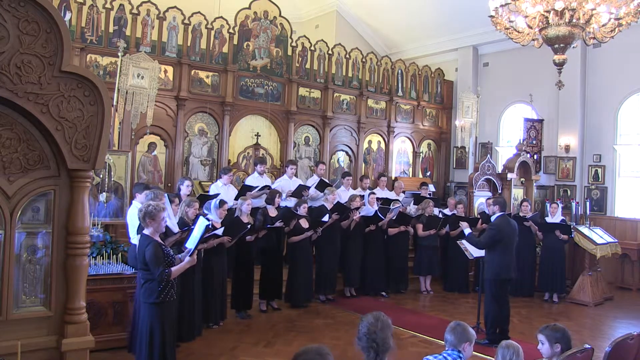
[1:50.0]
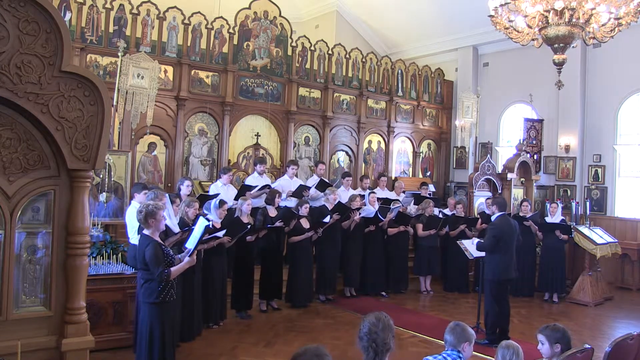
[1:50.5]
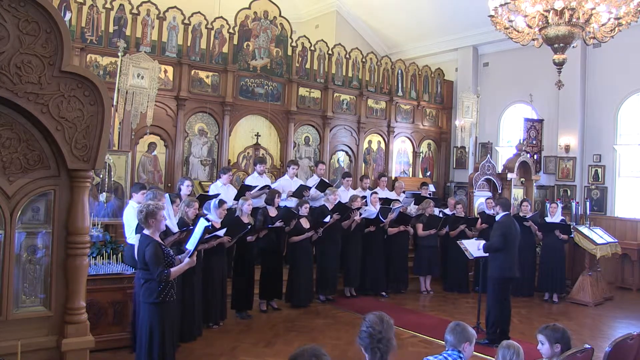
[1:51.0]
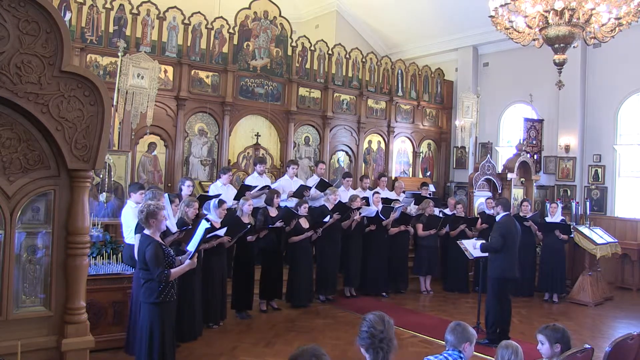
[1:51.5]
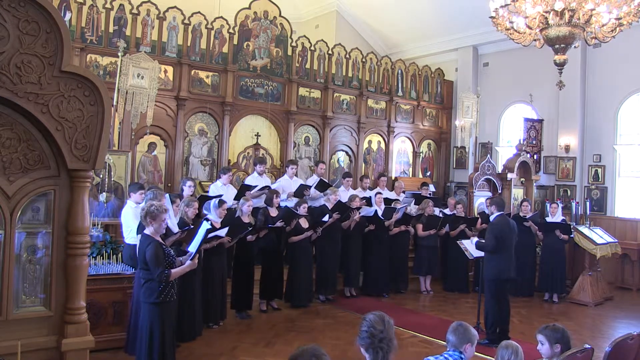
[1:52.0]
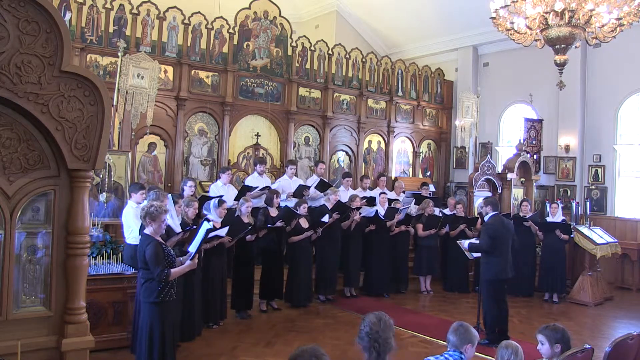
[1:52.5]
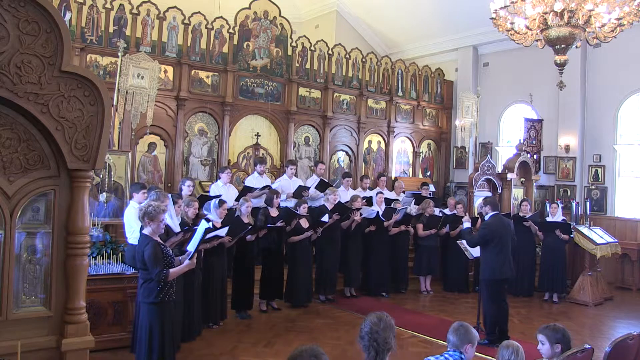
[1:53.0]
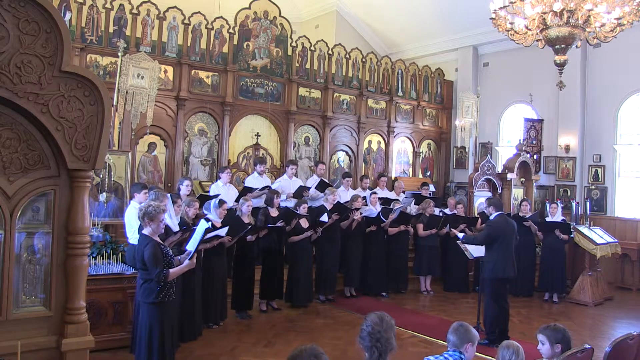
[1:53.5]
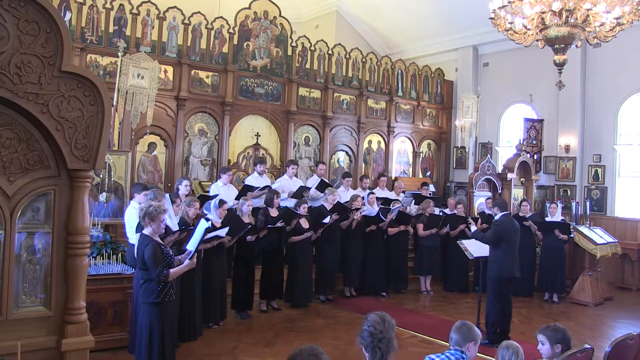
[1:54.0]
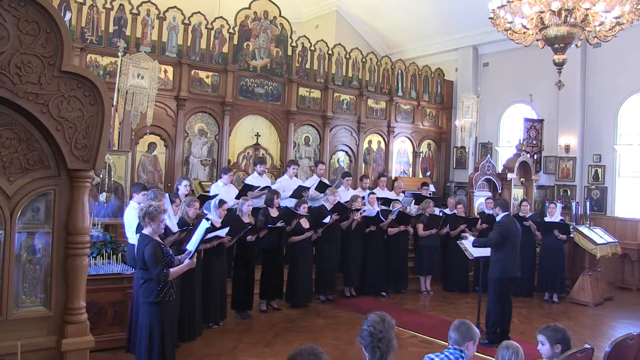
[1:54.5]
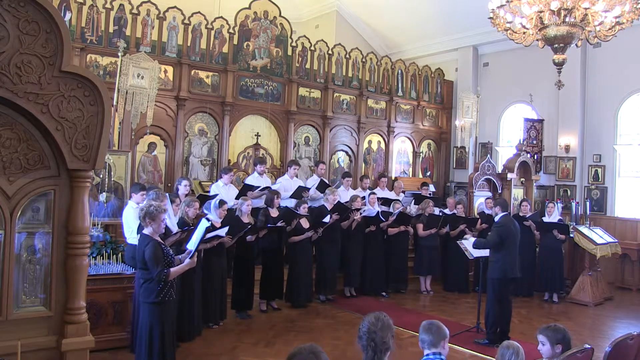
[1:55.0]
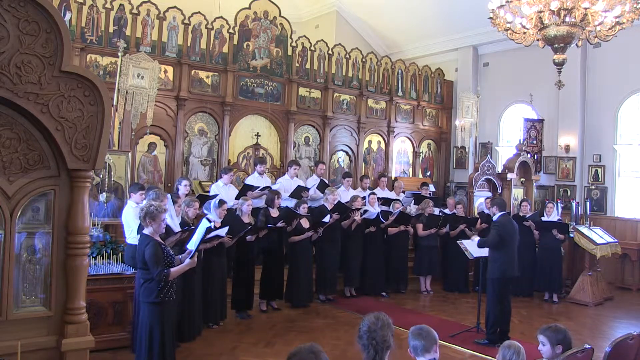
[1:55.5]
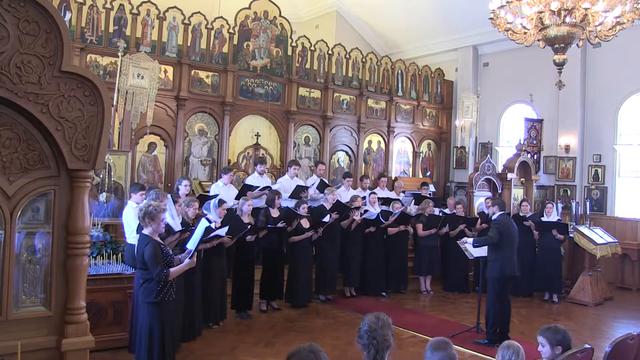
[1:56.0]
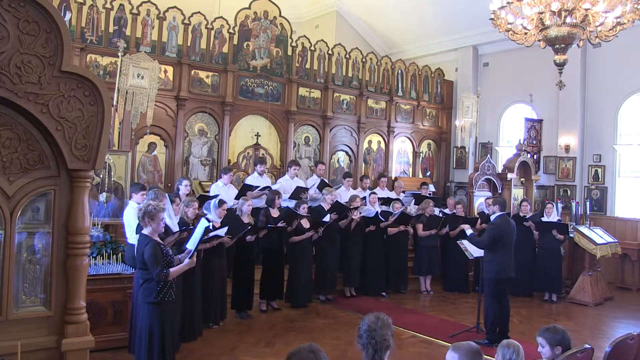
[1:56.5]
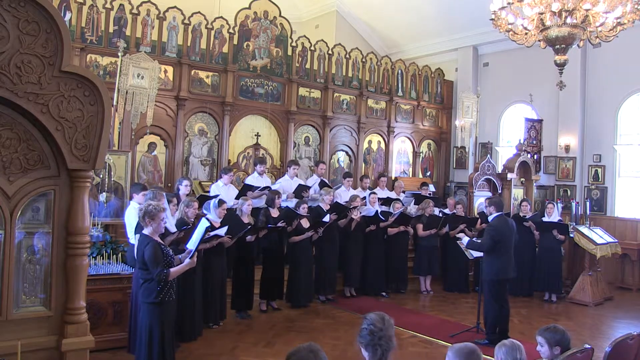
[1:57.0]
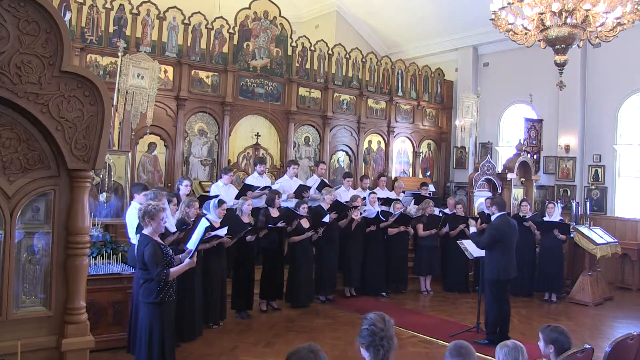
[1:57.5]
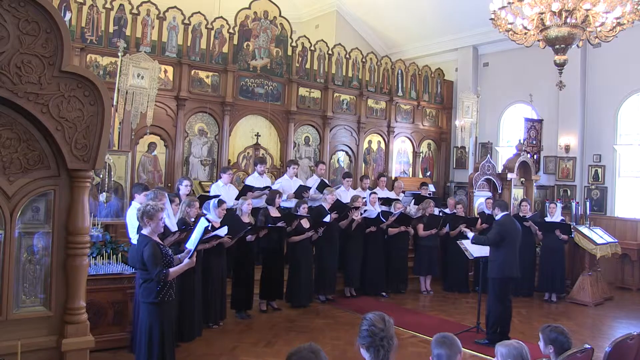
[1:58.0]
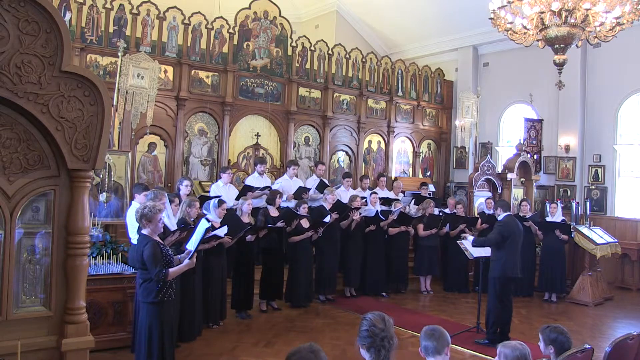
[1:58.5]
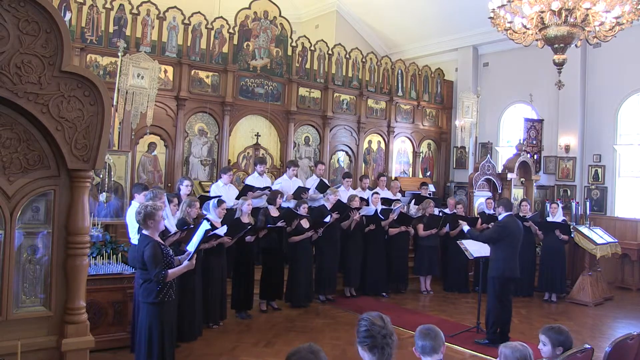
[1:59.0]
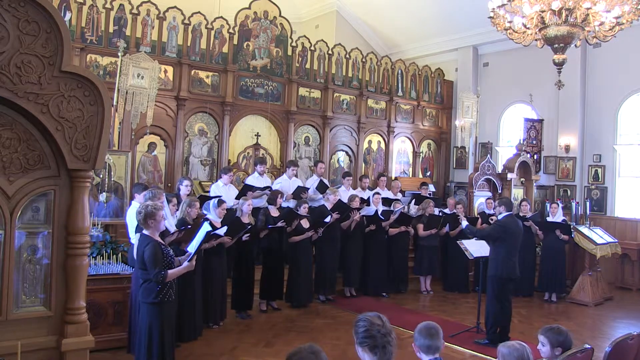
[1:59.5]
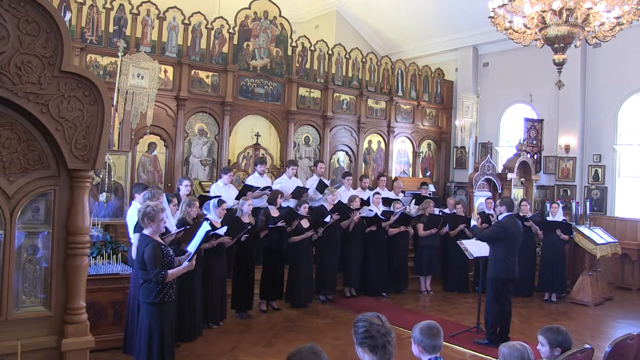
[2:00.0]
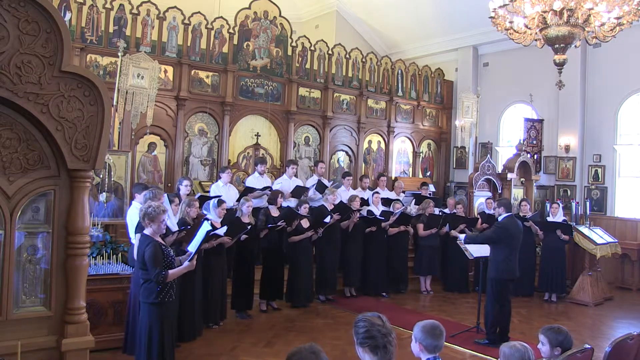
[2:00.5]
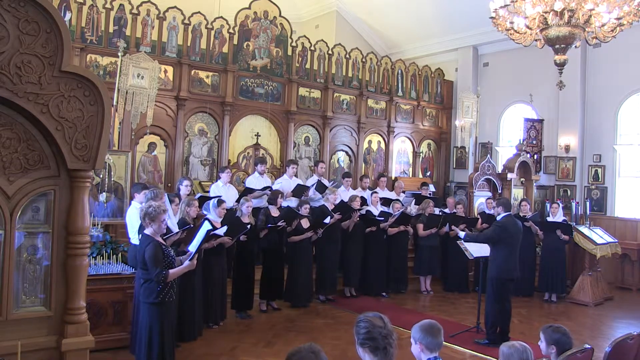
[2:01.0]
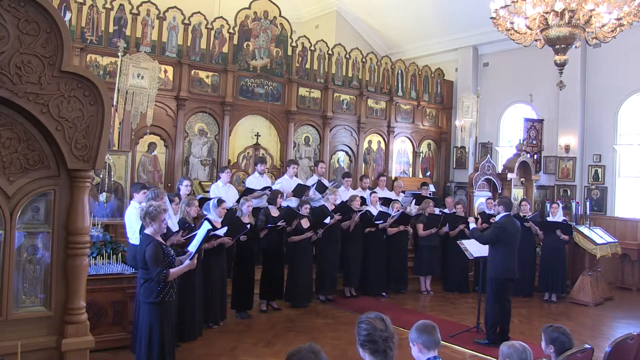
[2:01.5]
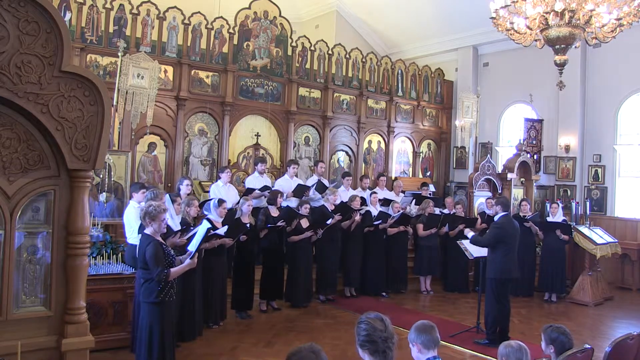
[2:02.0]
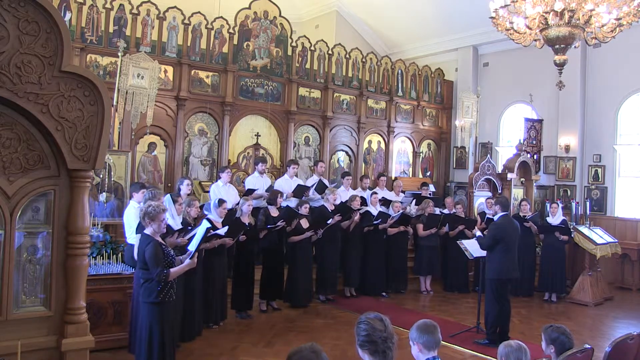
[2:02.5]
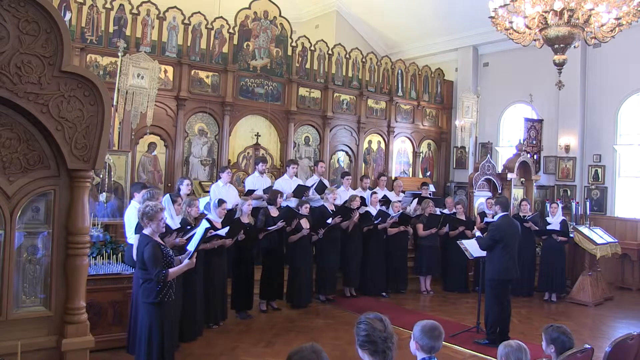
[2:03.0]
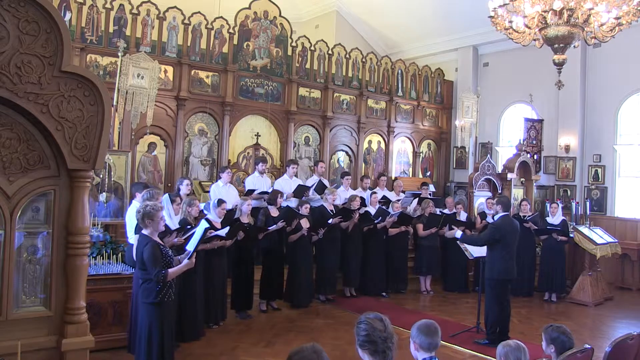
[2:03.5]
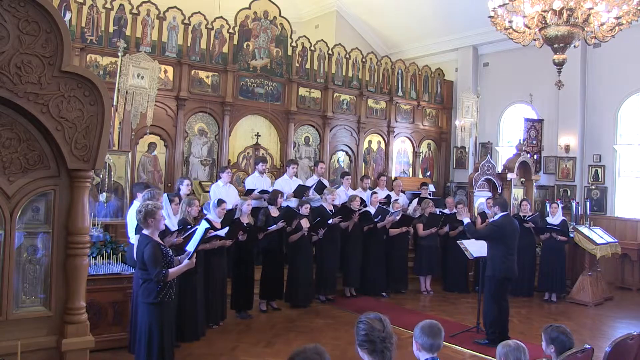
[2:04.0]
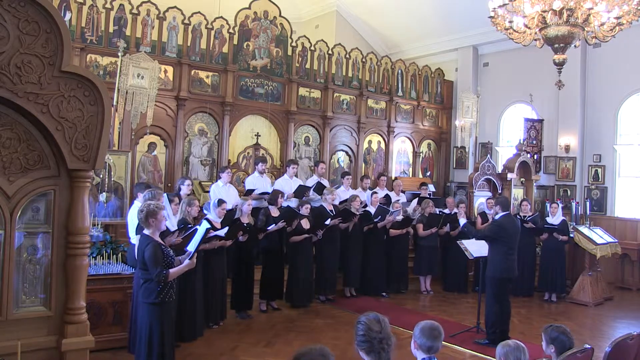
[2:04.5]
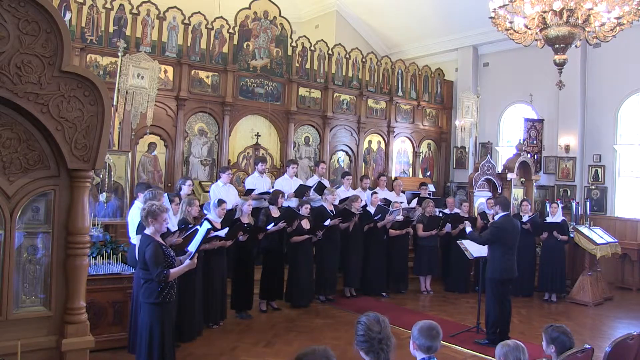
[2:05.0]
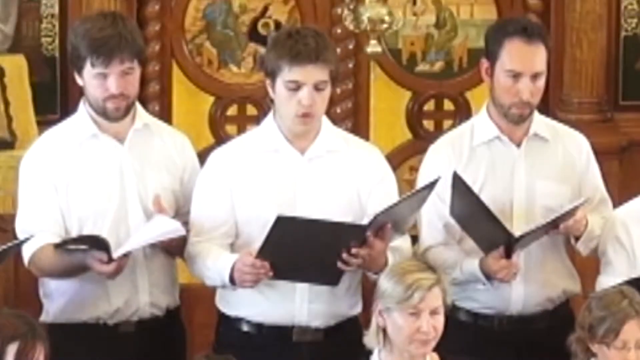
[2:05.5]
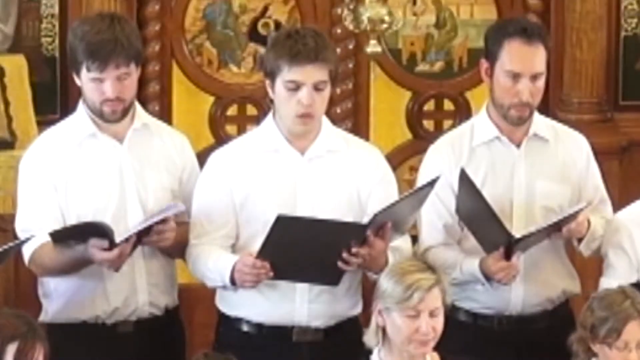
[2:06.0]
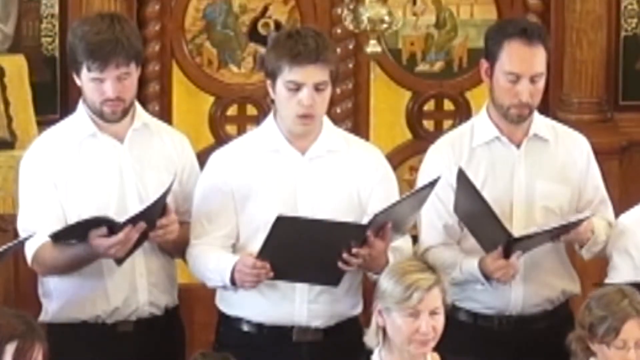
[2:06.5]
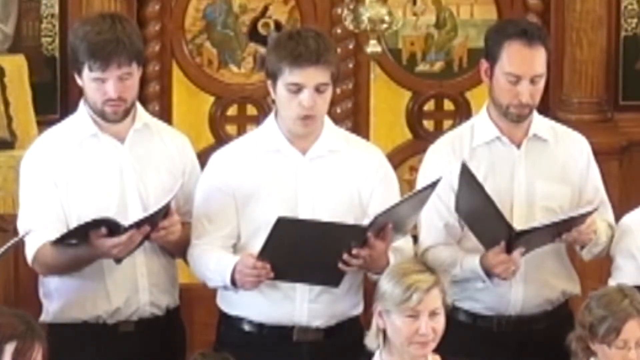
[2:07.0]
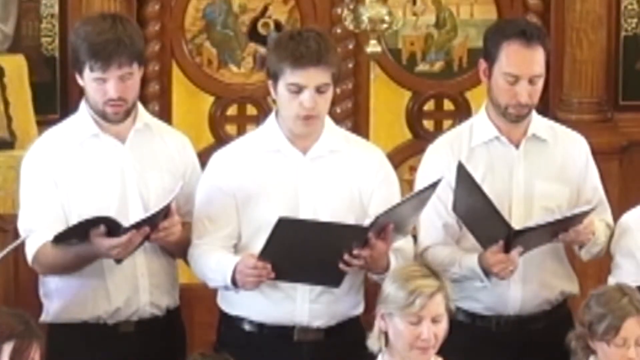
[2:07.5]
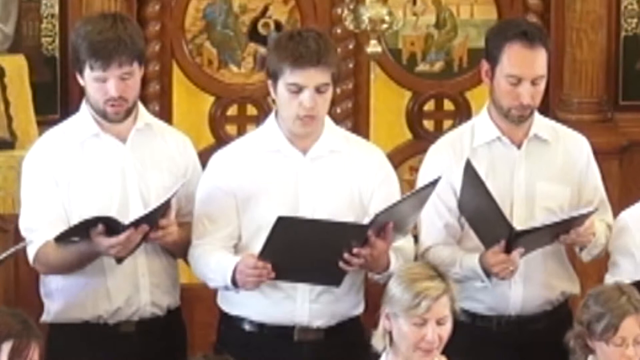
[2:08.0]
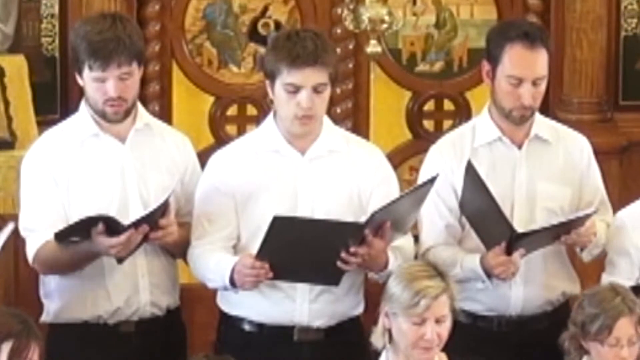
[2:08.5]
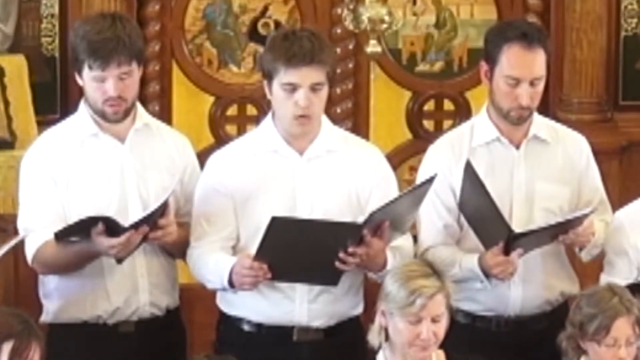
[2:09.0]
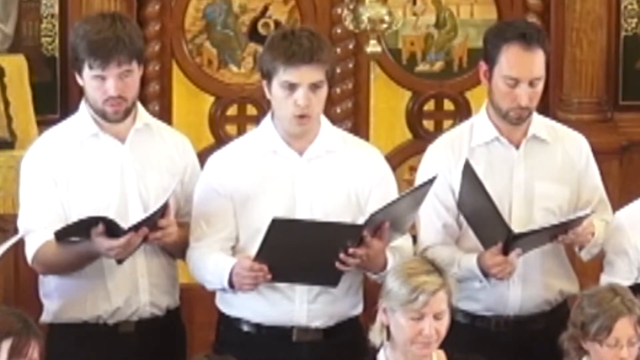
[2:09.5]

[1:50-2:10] The people continue to sing and seem to move with the flow of the music, while the conductor coordinates the choir with hand gestures. The view focuses on the three men, who have the open book in front of them and look downward as they sing. The large chandelier hangs from the ceiling in the top right corner of the church. The choir sings on the stage of the church. Behind the choir are large wooden murals of various religious figures of Christianity, Catholic; several of them appear to be saints. The murals appear to be a combination of wood and glass, though it is hard to tell. The walls and ceilings of the church are white. The floor the choir stands on is a brown wooden floor.